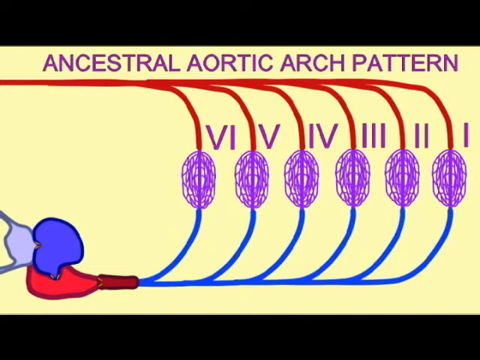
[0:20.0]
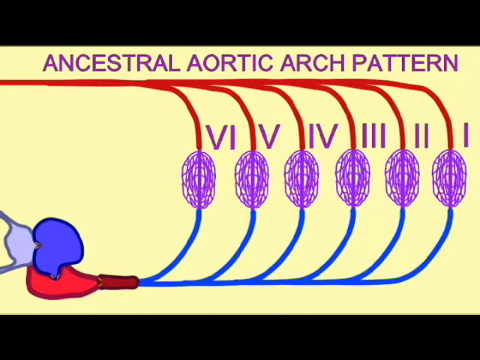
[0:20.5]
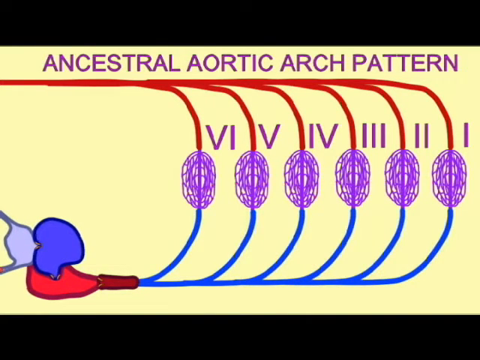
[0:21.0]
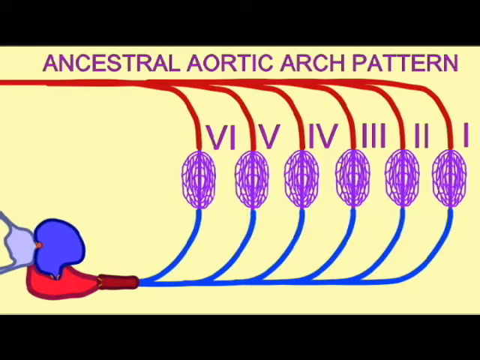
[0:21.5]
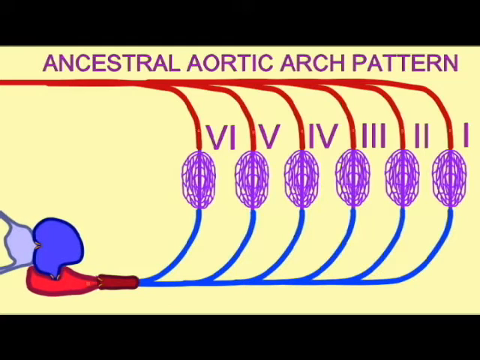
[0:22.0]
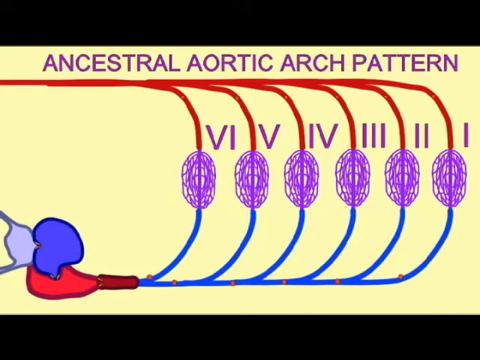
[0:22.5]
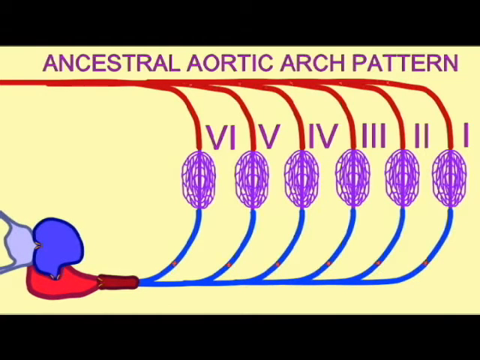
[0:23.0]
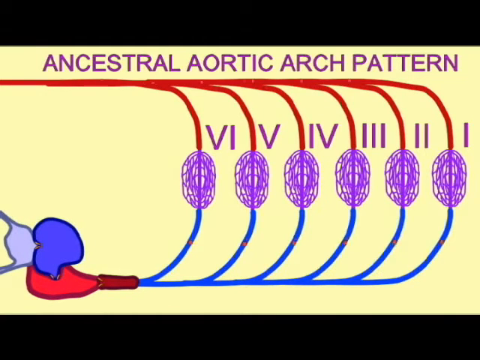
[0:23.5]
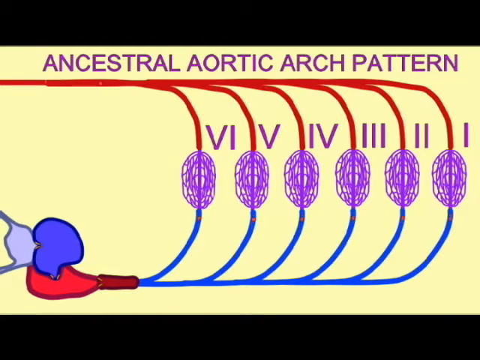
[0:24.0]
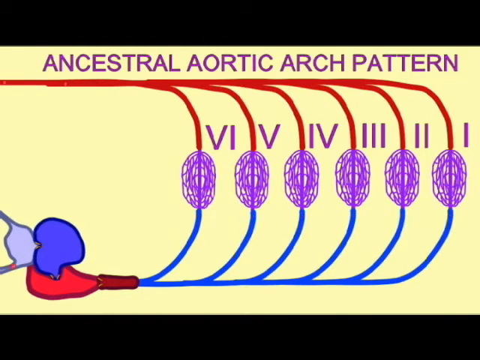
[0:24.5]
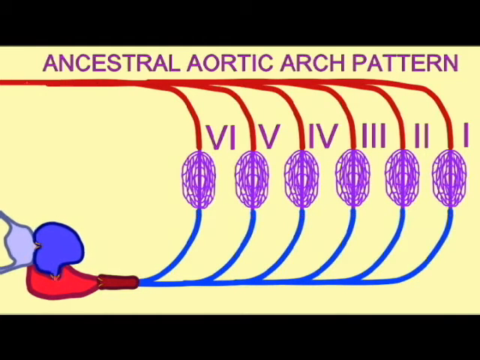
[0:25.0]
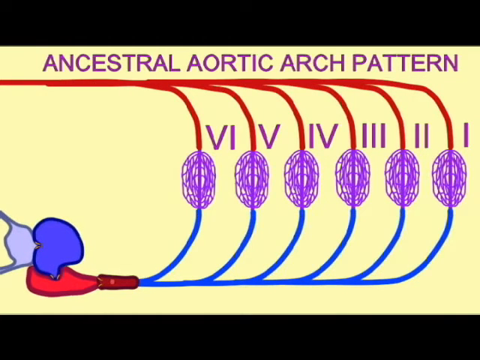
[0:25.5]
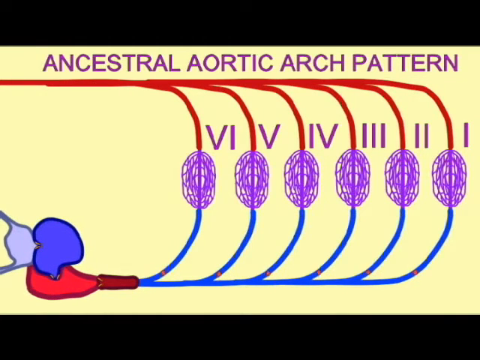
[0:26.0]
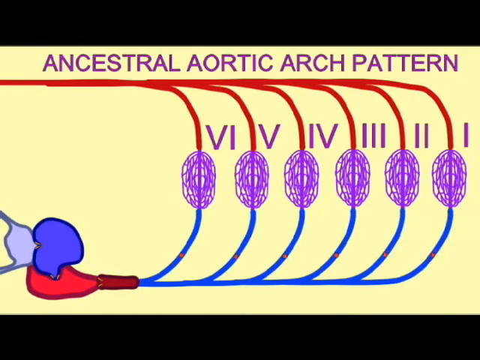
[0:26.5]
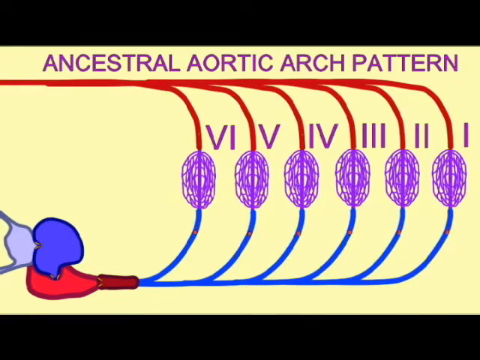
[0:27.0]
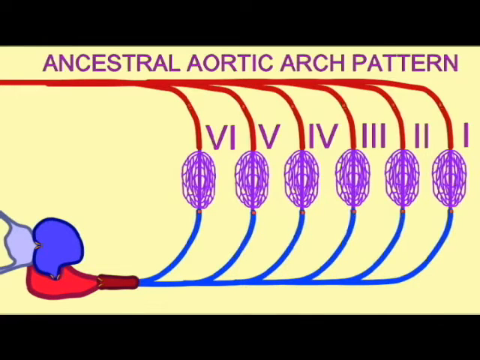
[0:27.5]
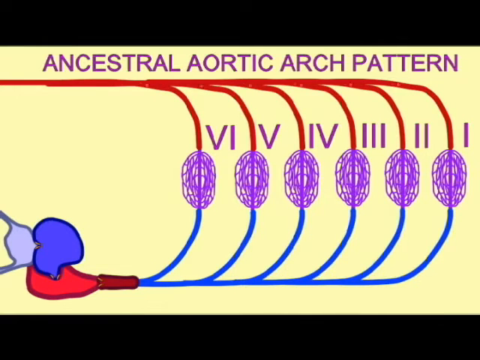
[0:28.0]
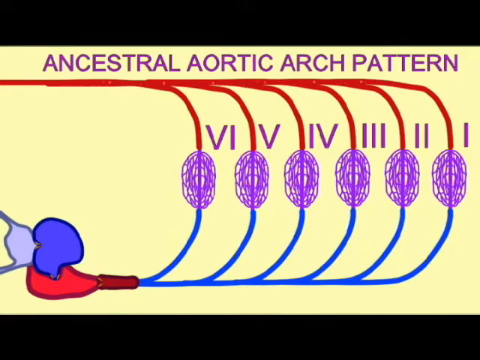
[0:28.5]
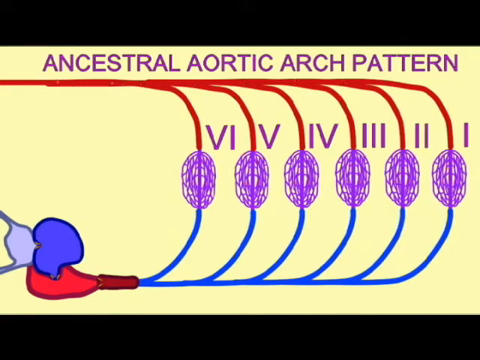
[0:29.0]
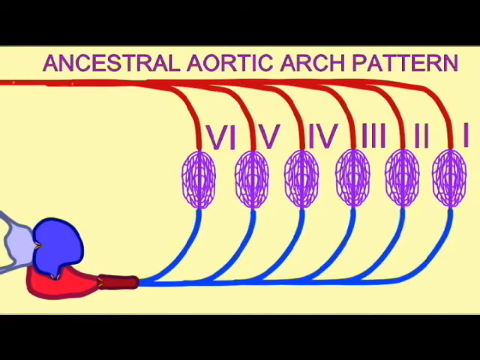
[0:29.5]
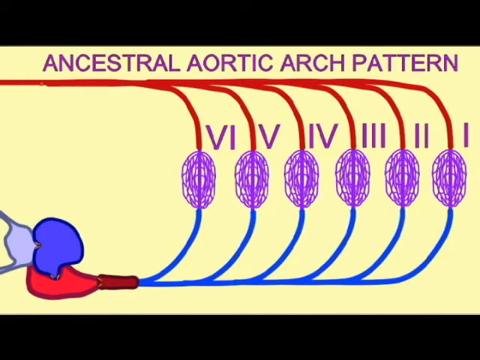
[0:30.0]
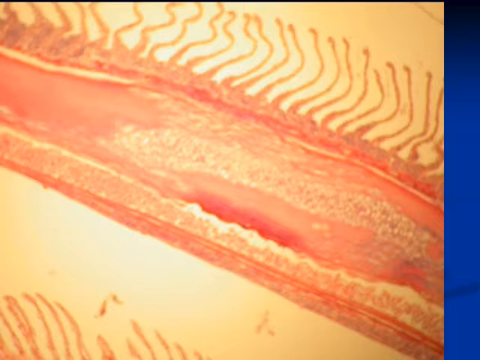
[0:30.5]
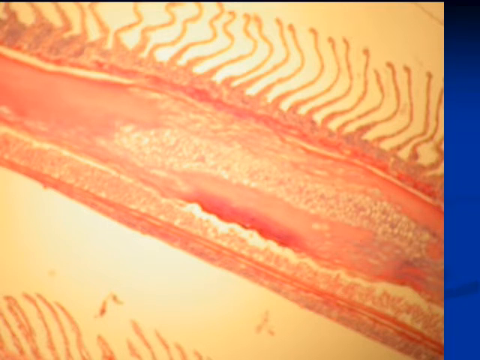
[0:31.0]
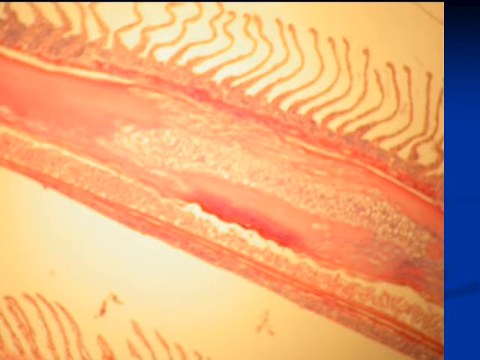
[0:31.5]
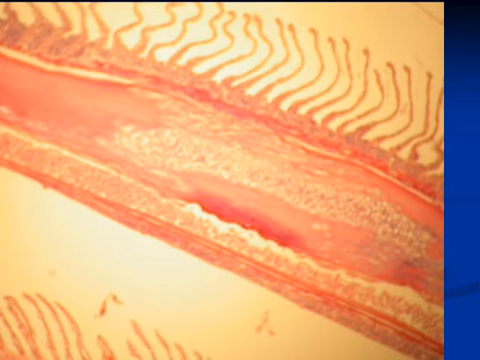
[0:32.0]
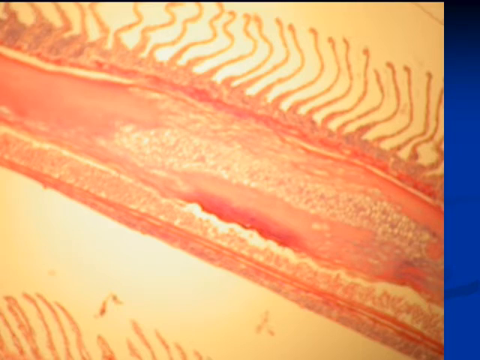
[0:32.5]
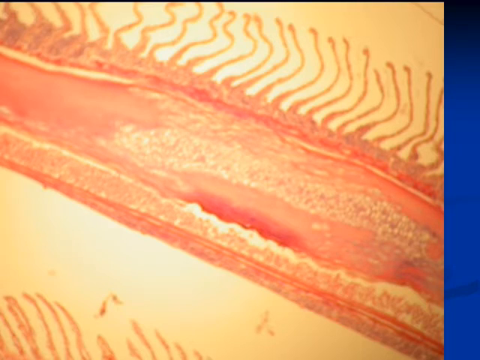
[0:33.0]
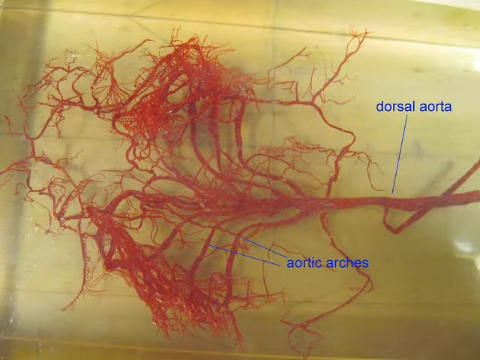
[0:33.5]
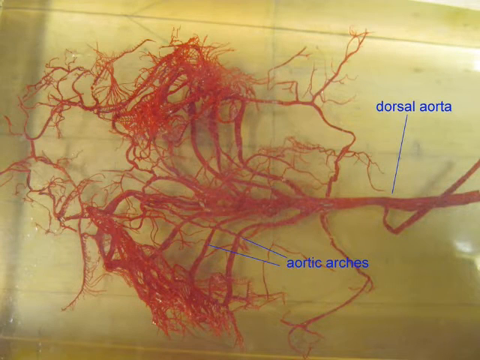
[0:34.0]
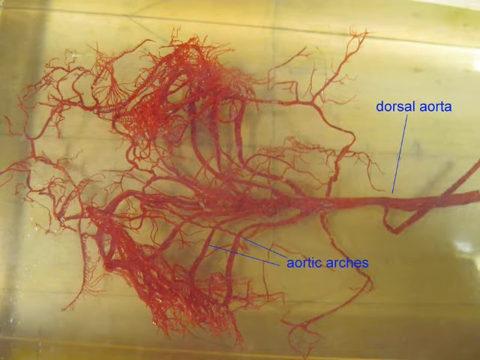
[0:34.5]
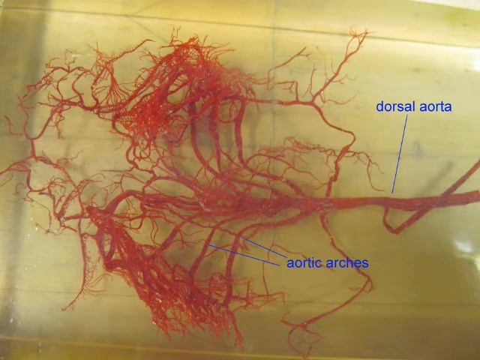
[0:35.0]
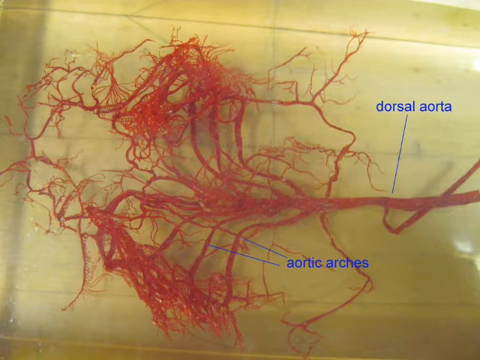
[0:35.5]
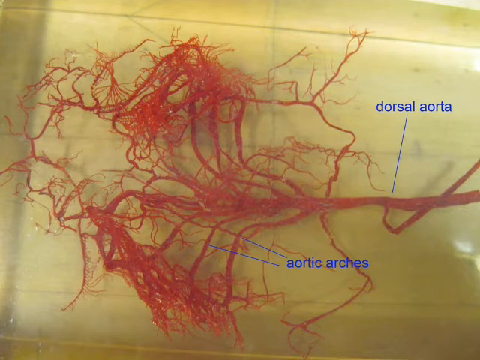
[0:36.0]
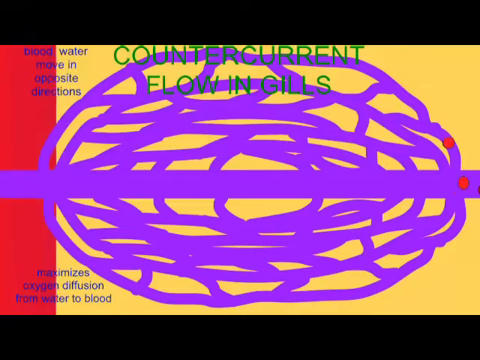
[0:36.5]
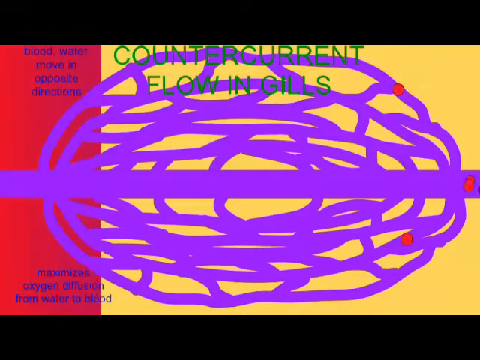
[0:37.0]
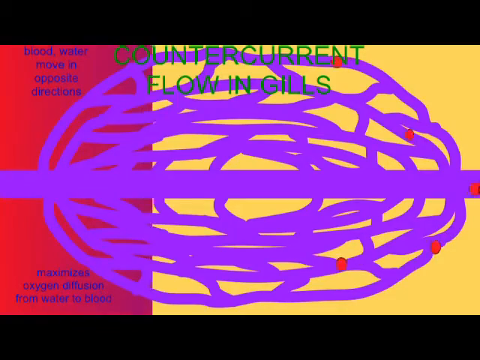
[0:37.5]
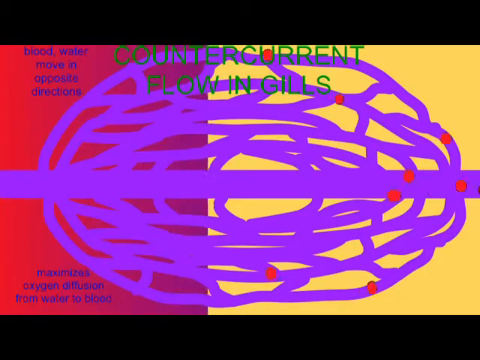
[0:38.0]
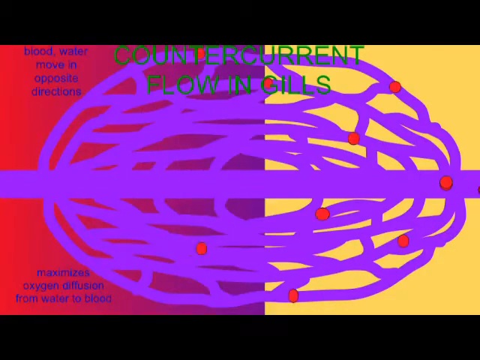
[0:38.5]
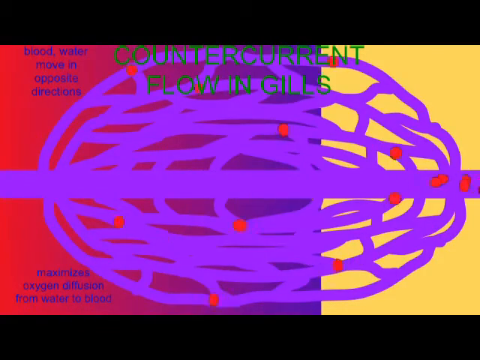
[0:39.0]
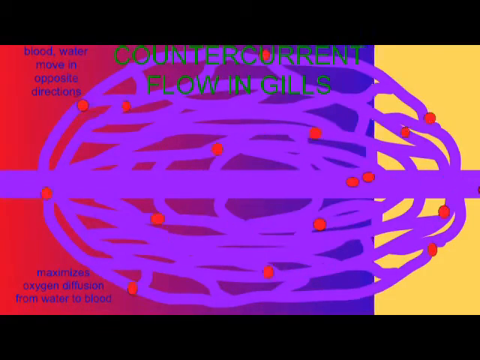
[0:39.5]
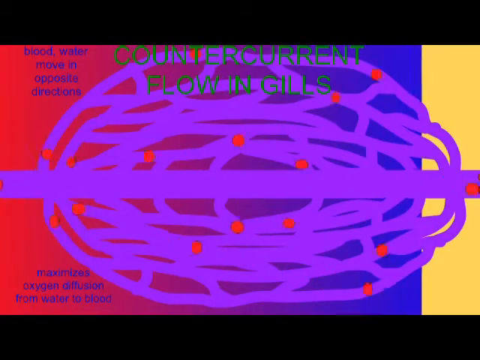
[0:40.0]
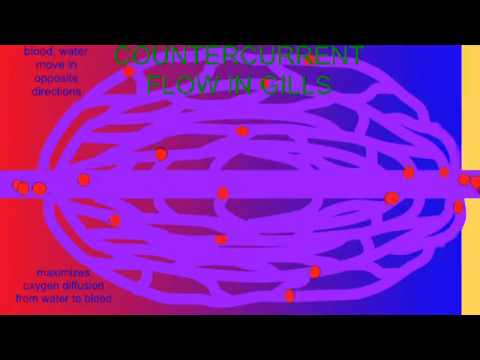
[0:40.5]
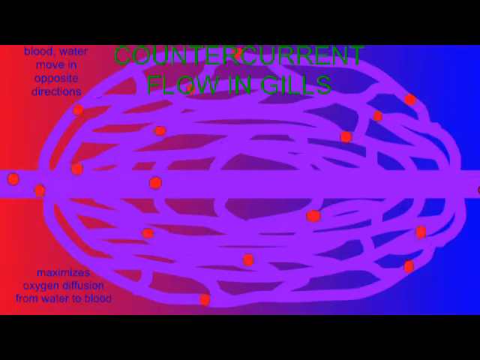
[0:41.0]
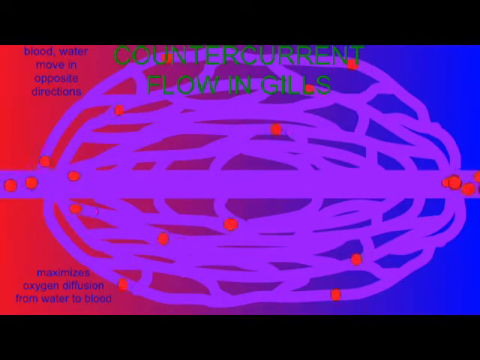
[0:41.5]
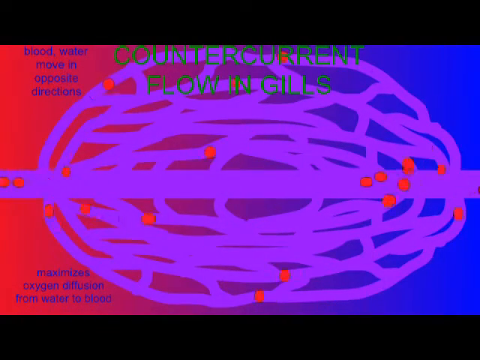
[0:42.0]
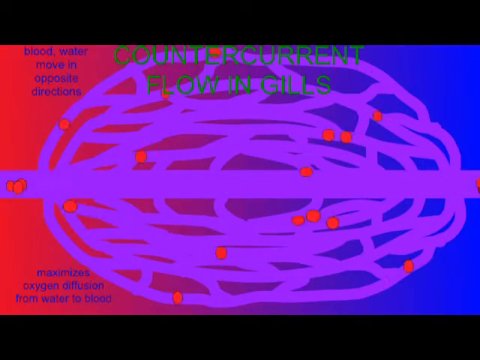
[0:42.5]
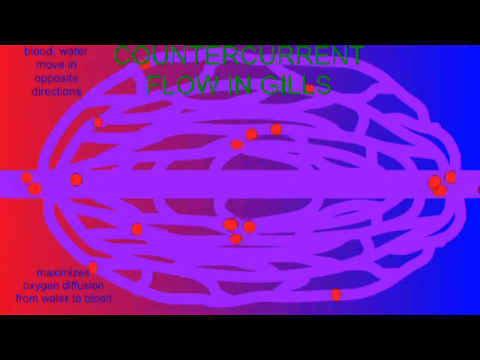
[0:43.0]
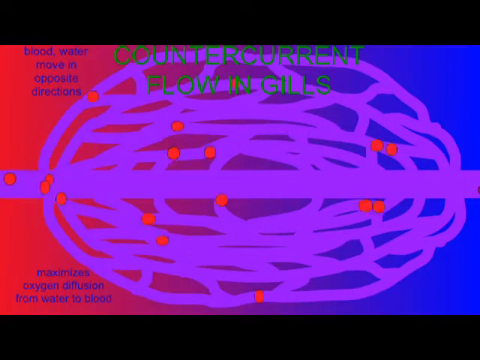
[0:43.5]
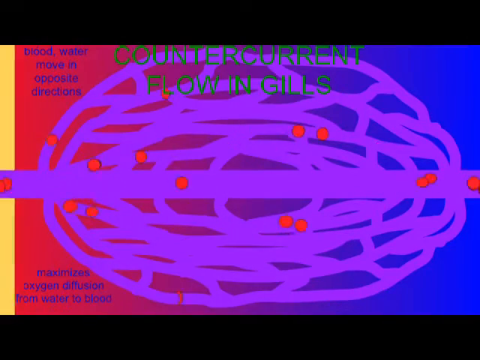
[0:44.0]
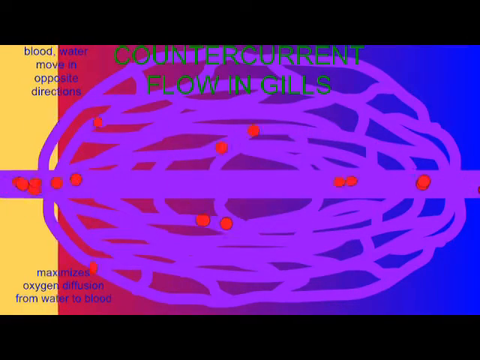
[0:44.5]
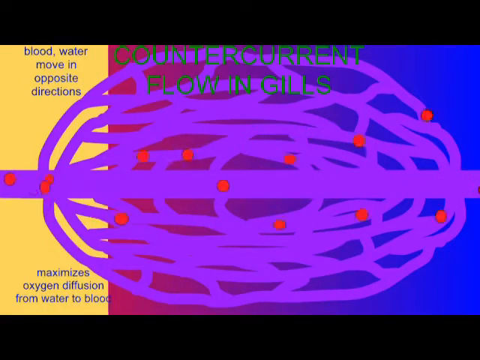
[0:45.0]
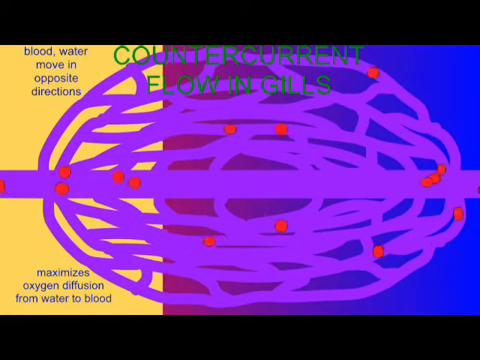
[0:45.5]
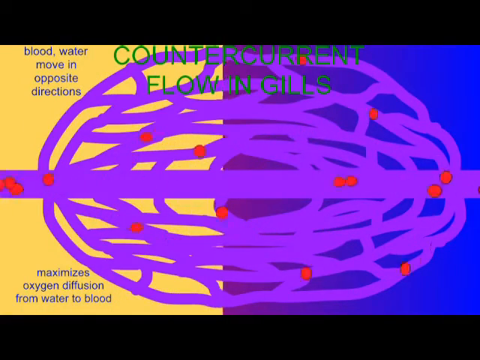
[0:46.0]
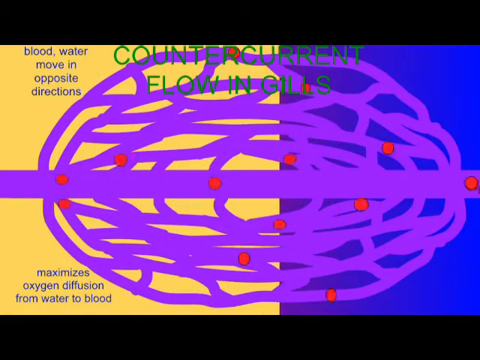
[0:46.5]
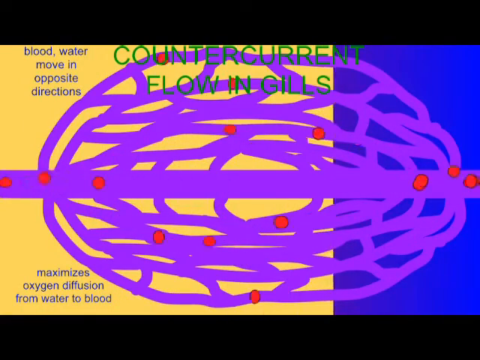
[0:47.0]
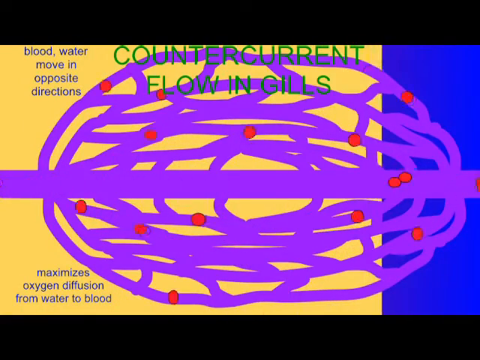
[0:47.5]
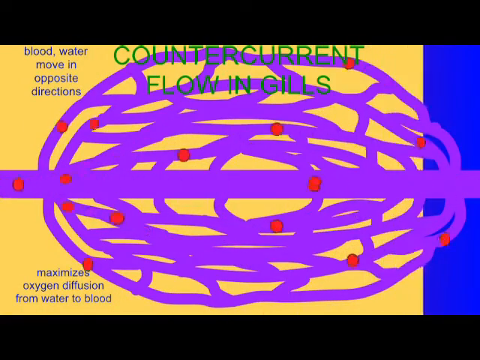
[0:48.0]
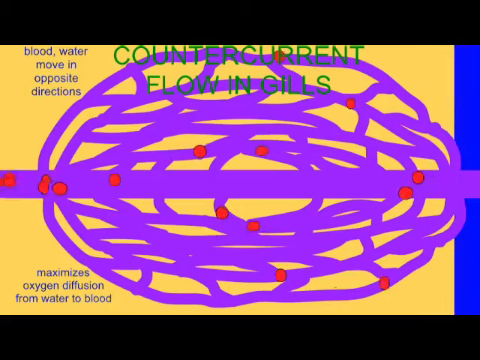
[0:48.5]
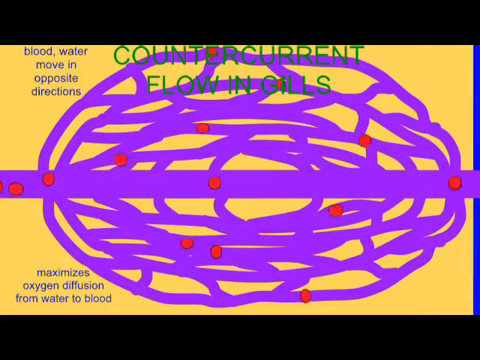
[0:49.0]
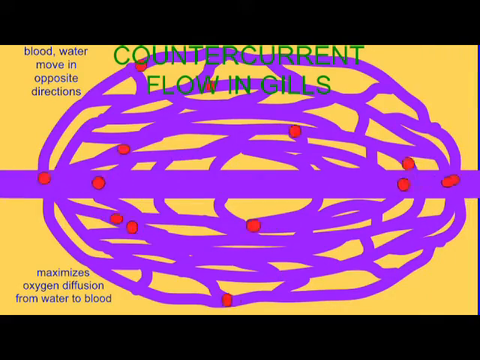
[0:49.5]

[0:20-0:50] A diagram of the ancestral aortic arch pattern of a fish shows six arches with purple orbs in their centers, labeled from right to left in Roman numerals 1 through 6. In the bottom left corner of the screen is an anatomical diagram of some fish anatomy, with a pulse. Next, the screen shows the interior of a fish, salmon colored and tan. An anatomical diagram then shows the dorsal aorta and the aortic arches inside the fish, with veins in the aortas. The screen changes to show counter-current flow in the gill: a diagram with red dots flowing through it to show the movement of water through the gill. Script text in the top left and bottom left corners reads "counter-current flow in gills", "blood water move in opposite directions" and "maximizes oxygen diffusion from water to blood".